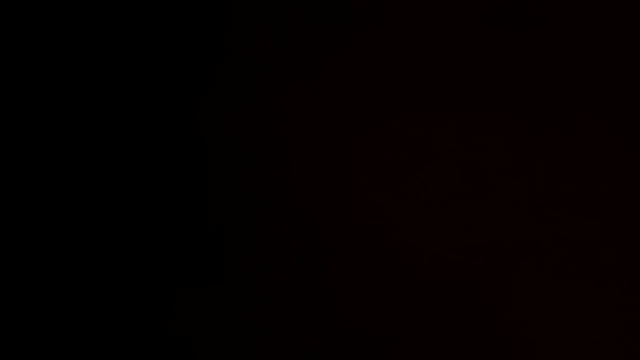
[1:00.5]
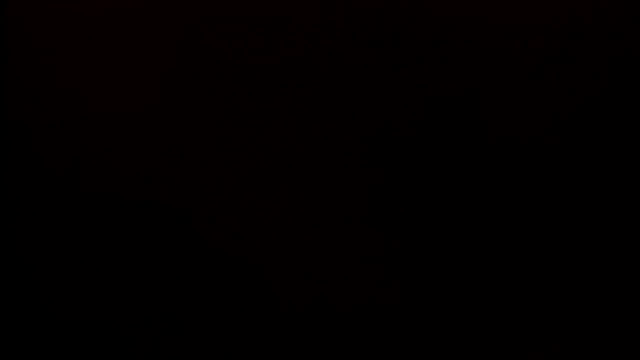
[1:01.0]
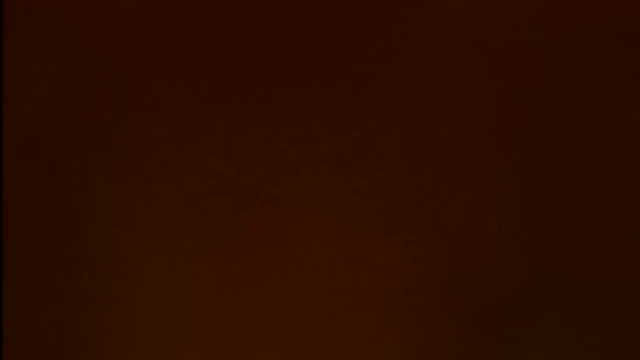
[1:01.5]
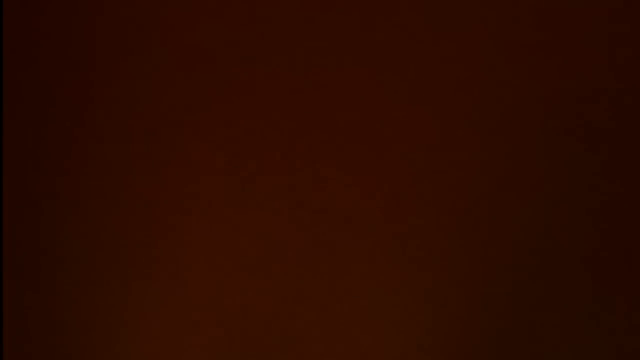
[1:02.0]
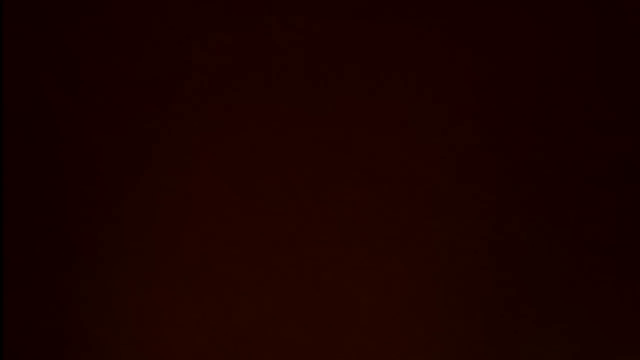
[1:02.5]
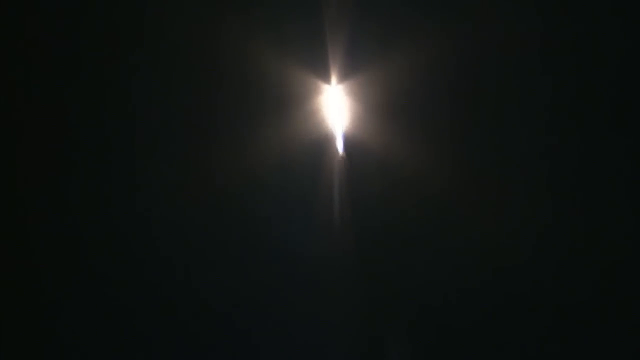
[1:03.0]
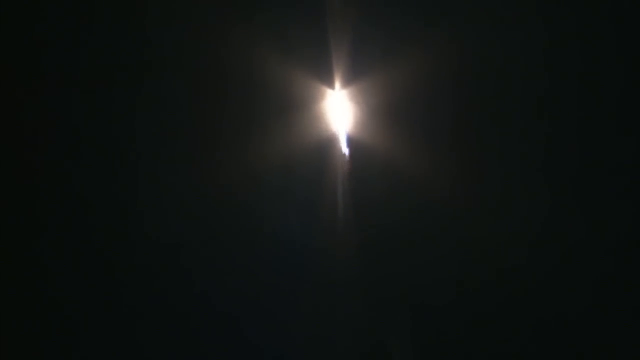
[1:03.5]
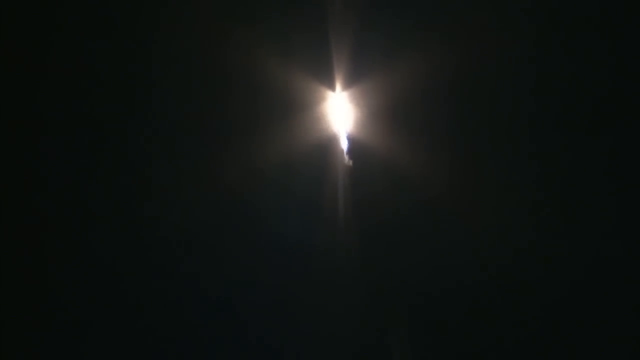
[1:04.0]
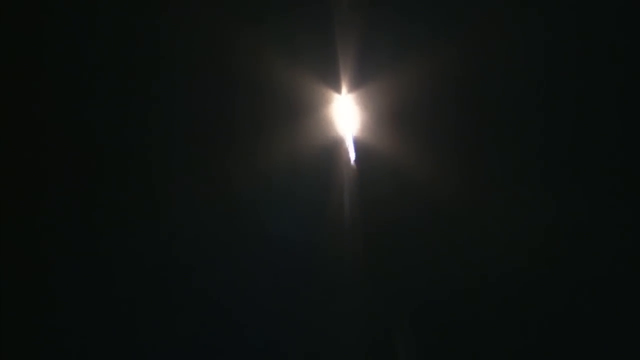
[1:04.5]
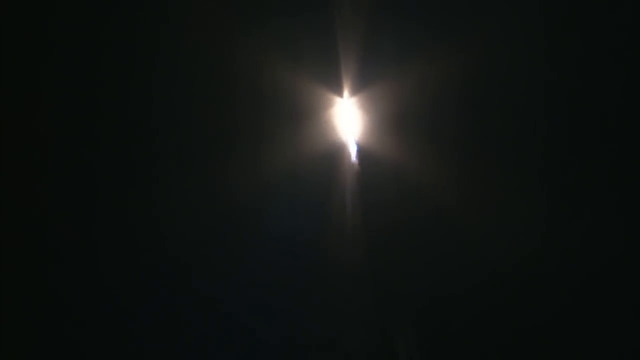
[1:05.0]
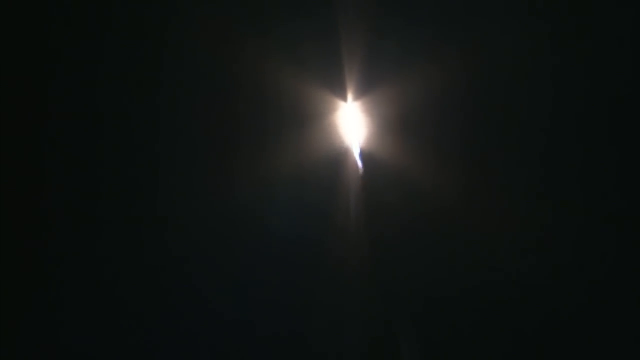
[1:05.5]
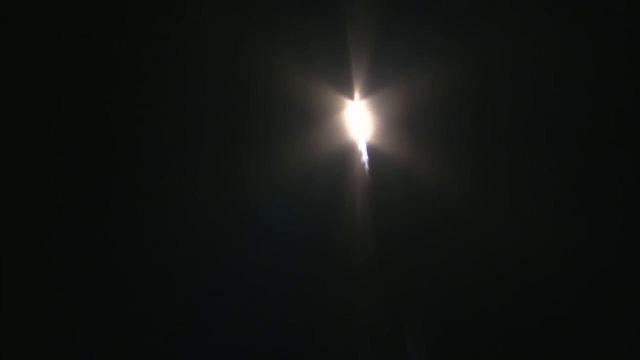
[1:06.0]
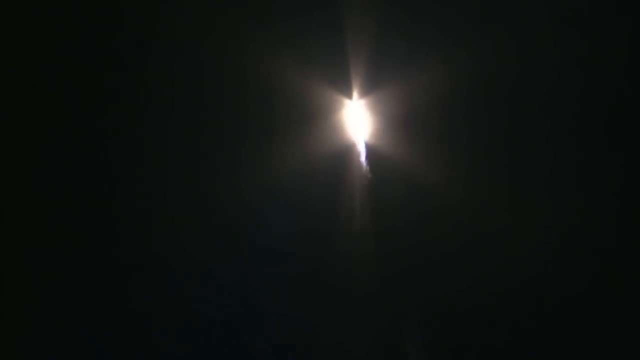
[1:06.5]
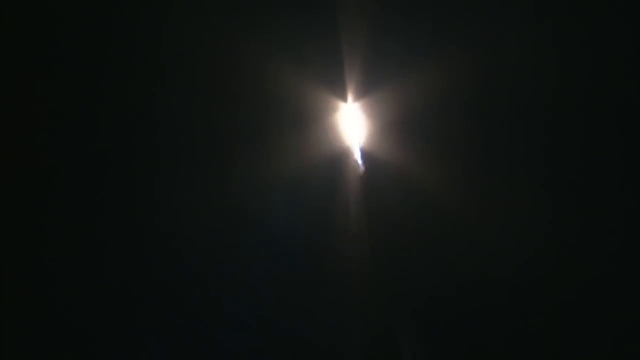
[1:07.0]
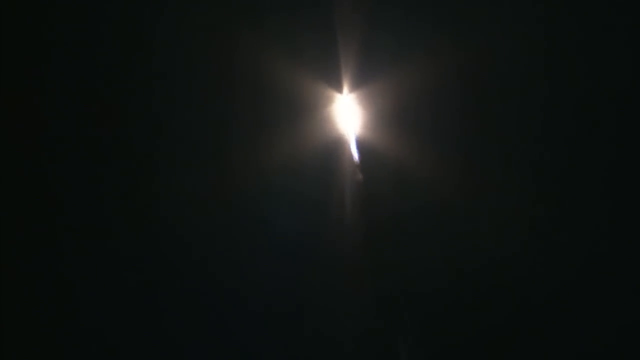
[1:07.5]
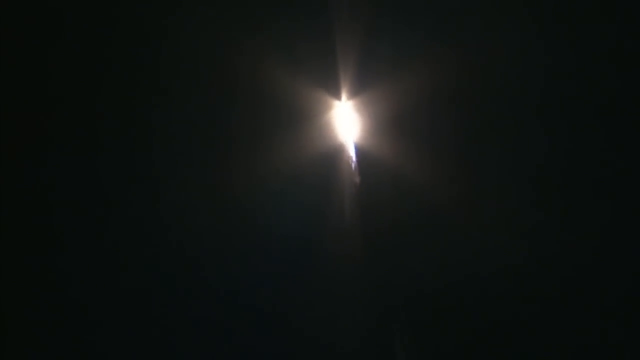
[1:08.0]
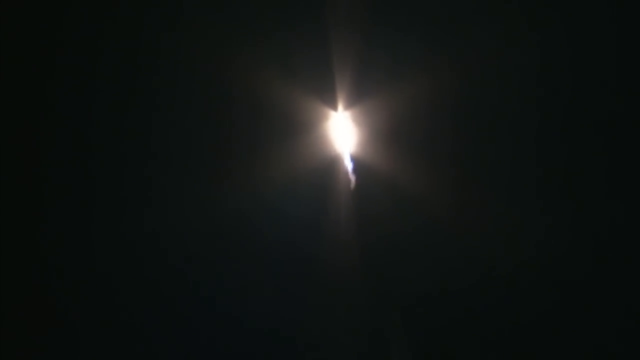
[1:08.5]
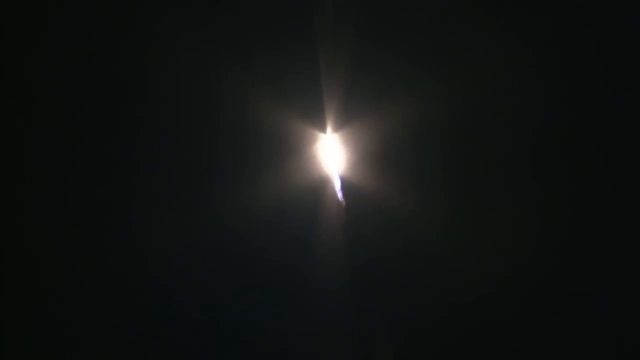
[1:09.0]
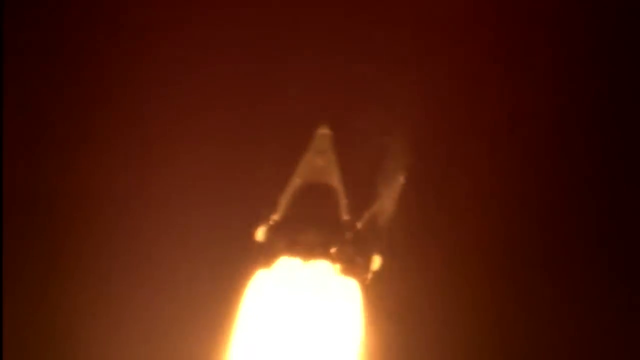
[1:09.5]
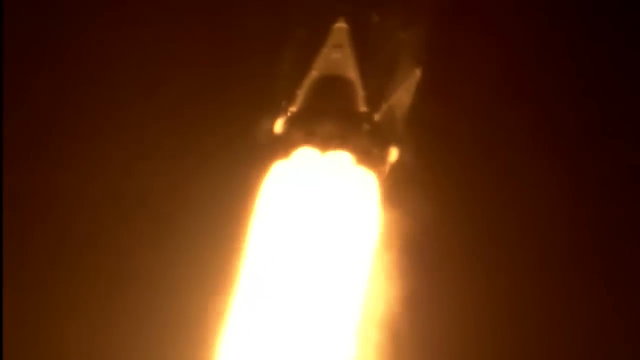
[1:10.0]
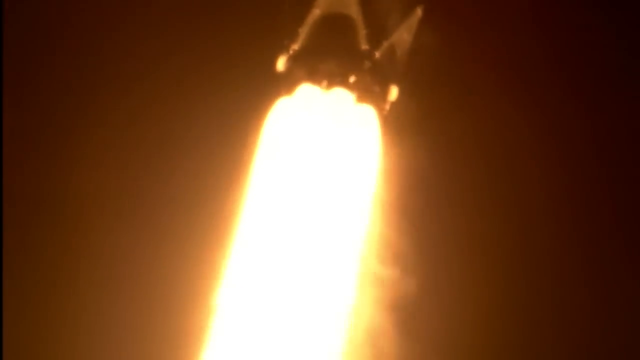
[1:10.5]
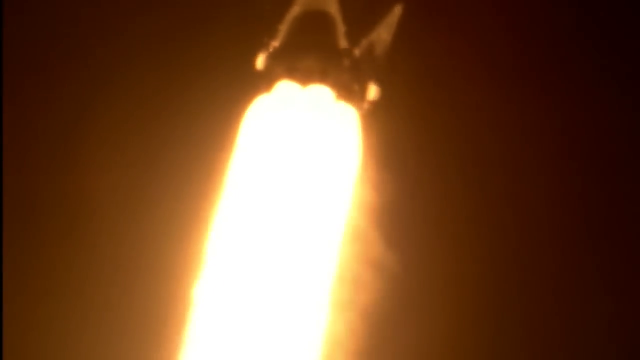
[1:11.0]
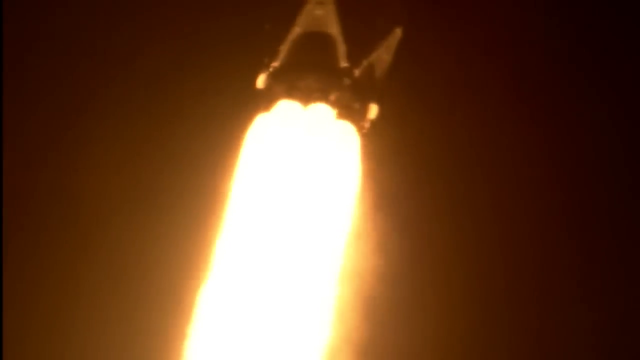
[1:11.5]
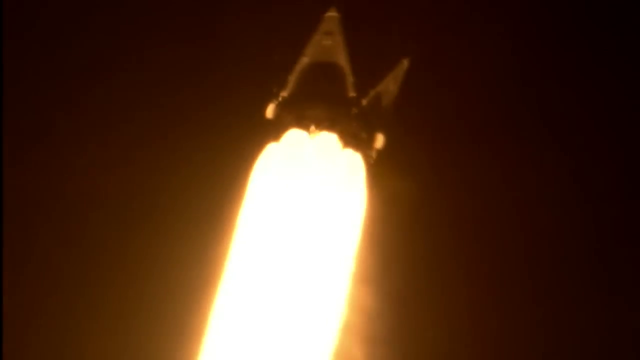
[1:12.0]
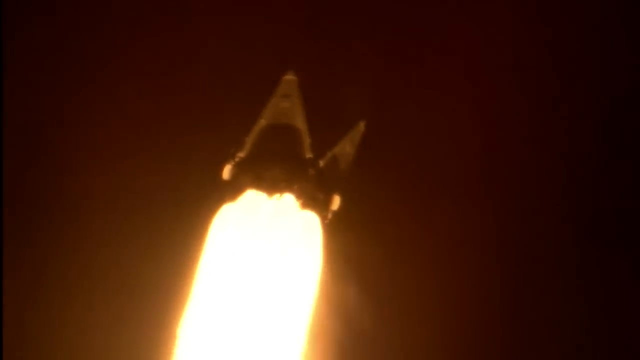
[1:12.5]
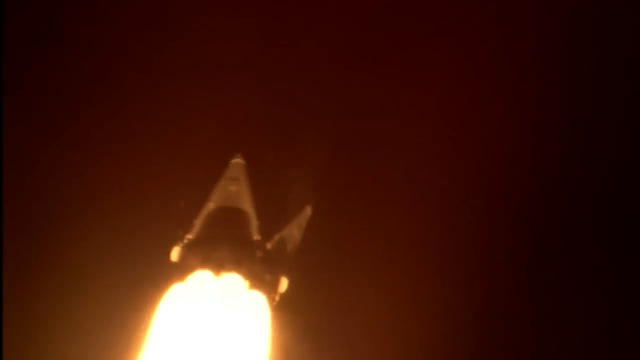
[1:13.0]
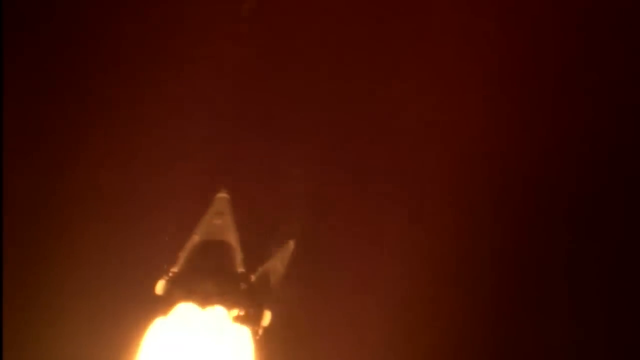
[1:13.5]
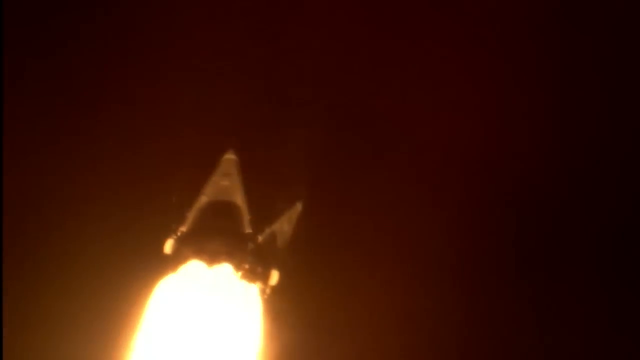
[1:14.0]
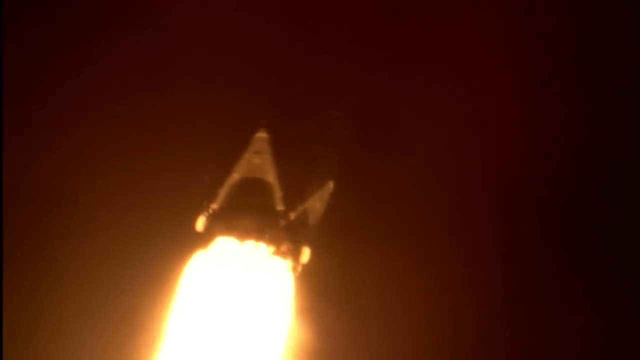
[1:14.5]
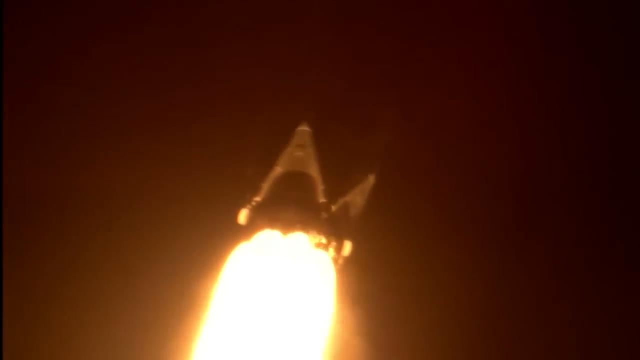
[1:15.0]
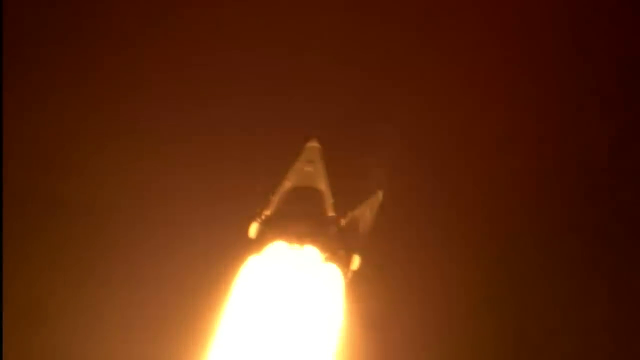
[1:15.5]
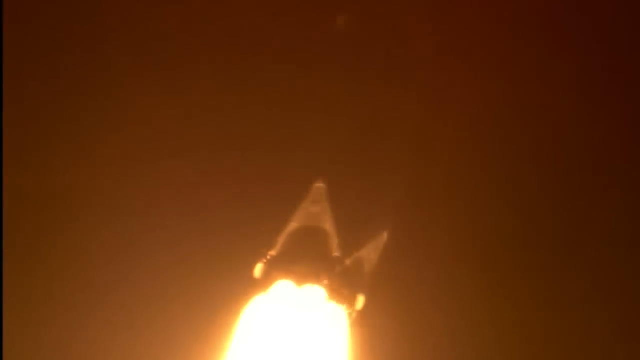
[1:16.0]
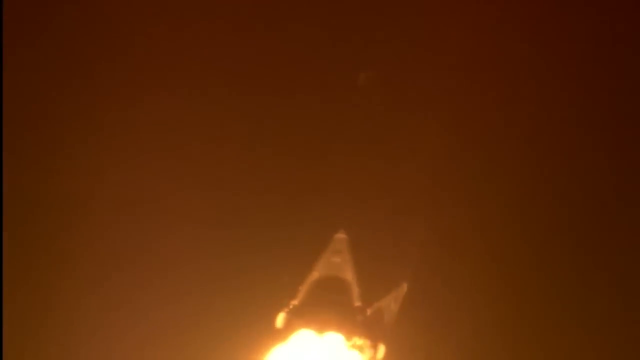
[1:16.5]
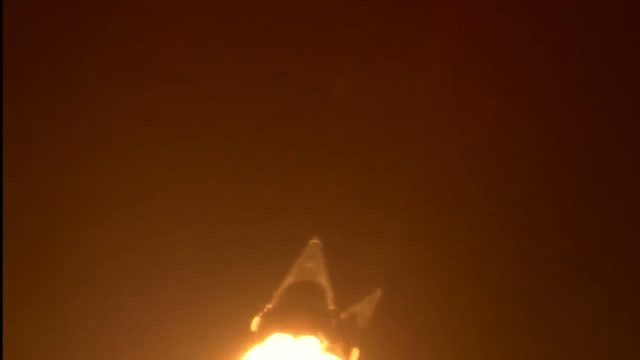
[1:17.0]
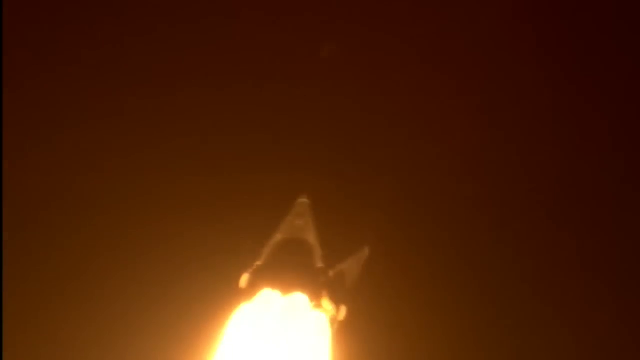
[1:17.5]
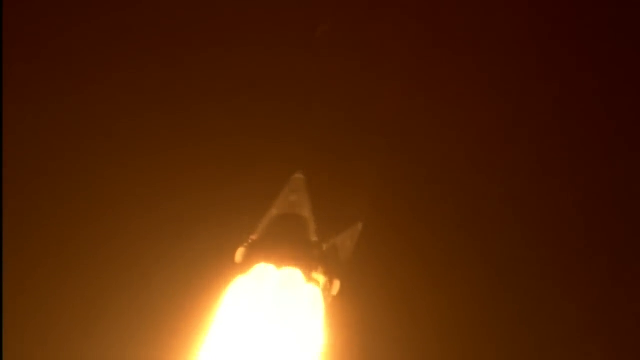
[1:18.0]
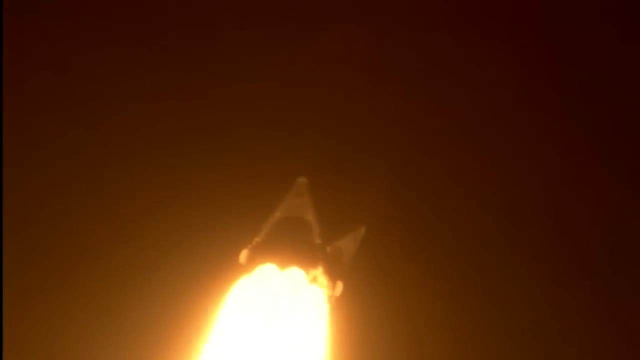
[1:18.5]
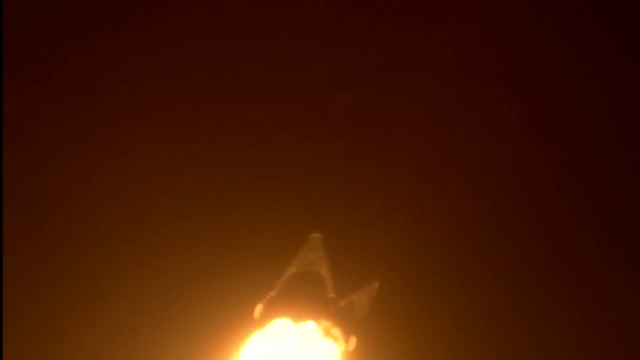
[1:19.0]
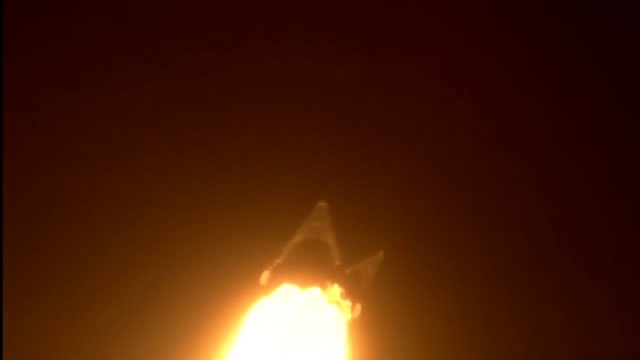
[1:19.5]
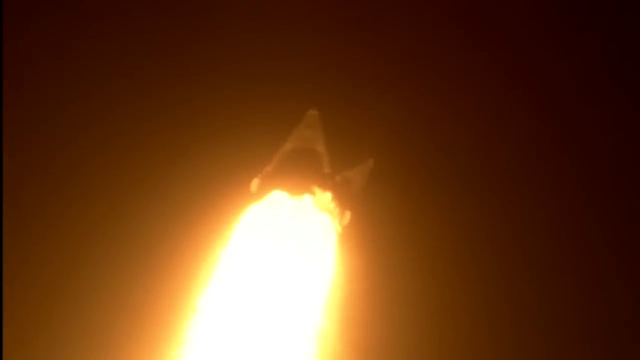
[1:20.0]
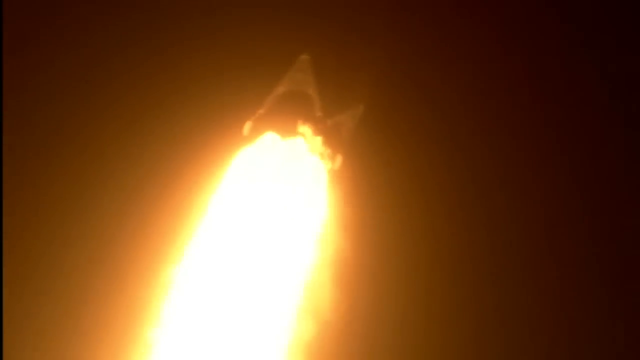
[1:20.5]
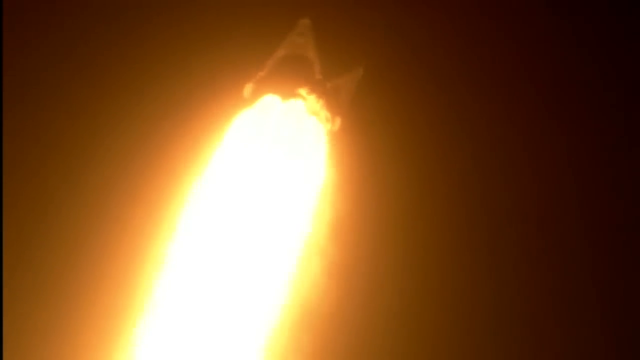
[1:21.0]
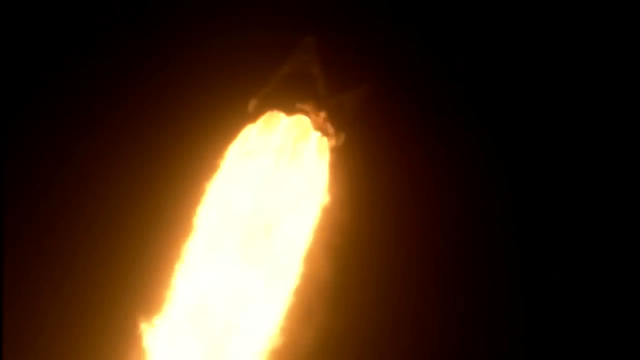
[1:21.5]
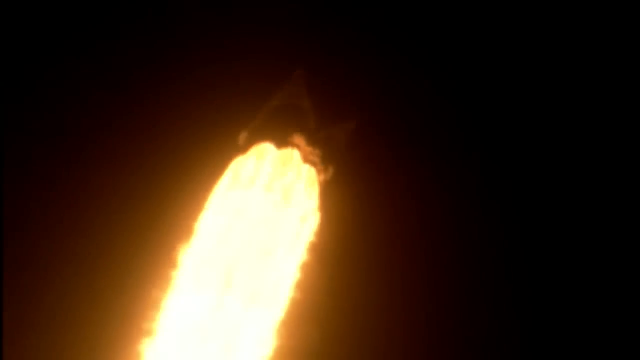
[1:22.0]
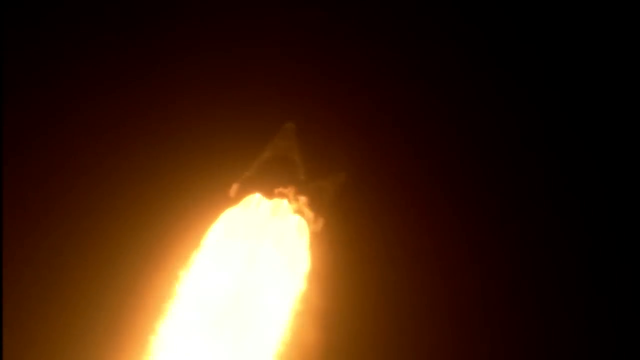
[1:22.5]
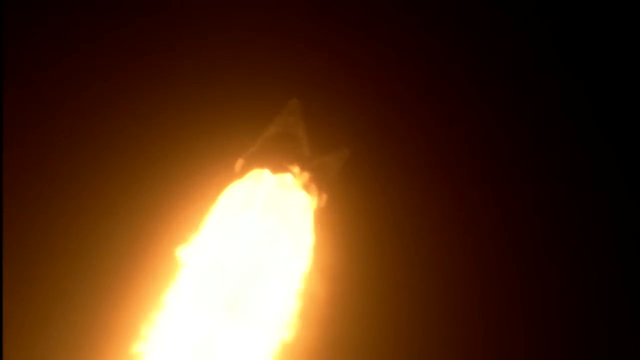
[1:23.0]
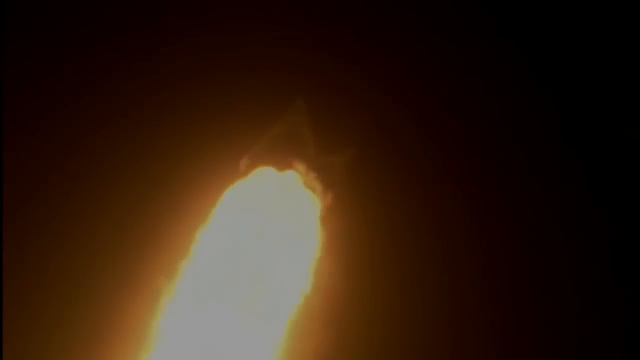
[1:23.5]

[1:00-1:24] Seen from a distance, the rocket's little flame and smoke tail gets shorter and shorter. A very close-up image then shows the flames still coming out from behind the rocket, and they seem to dim a little bit, apparently causing the shortening tail seen from a distance. Different flames and balls of fire jut out from around the big long flame.